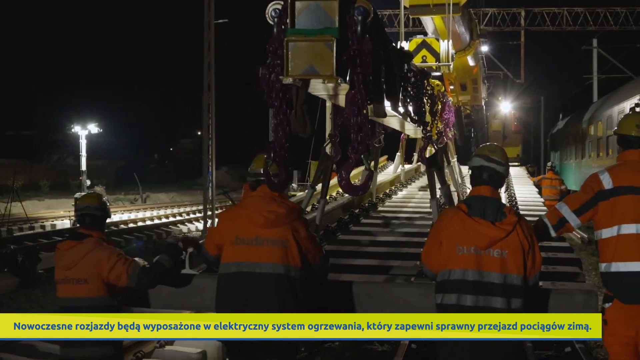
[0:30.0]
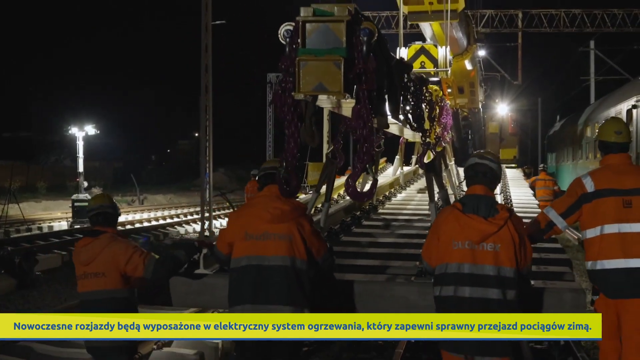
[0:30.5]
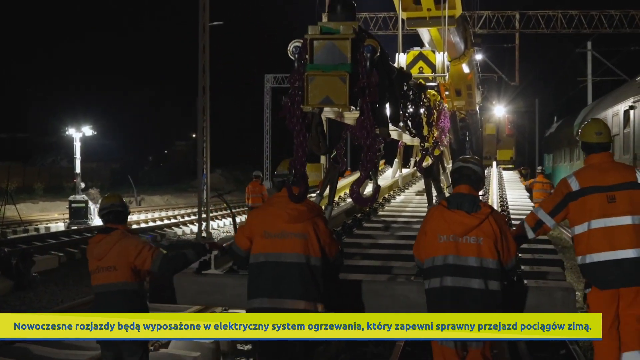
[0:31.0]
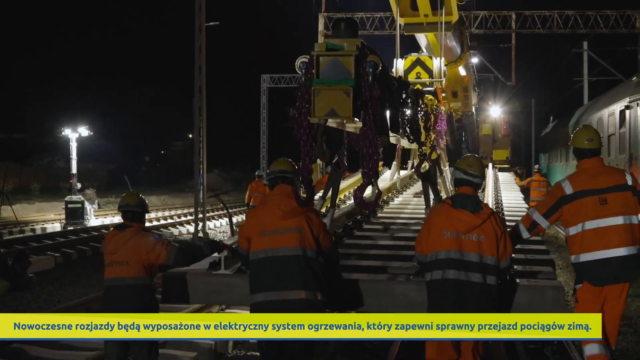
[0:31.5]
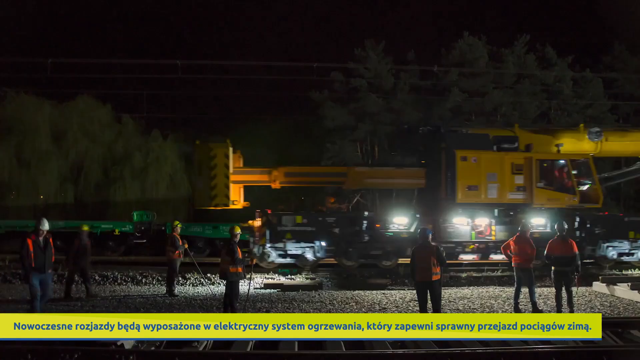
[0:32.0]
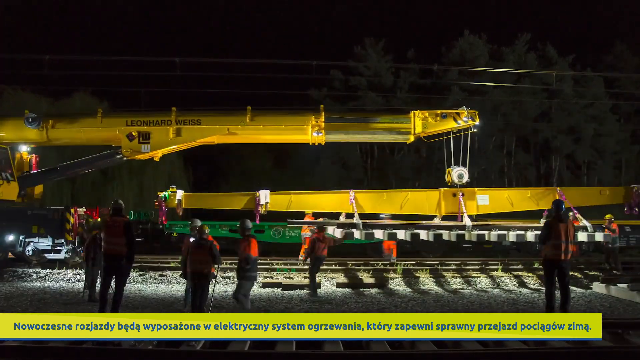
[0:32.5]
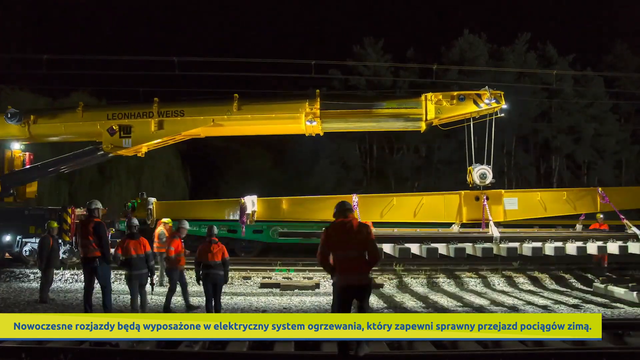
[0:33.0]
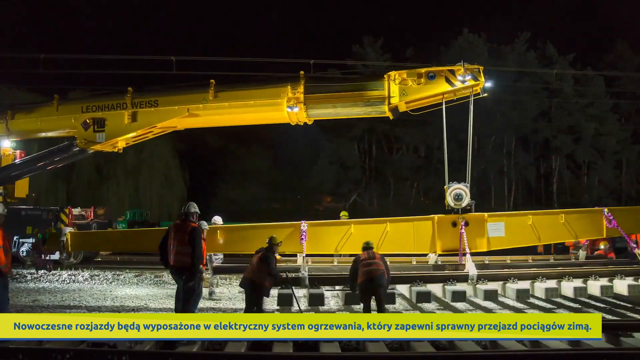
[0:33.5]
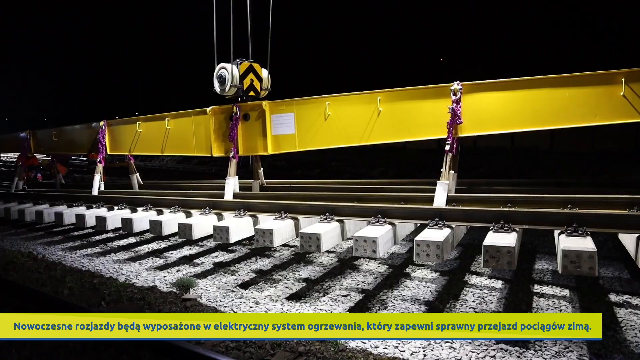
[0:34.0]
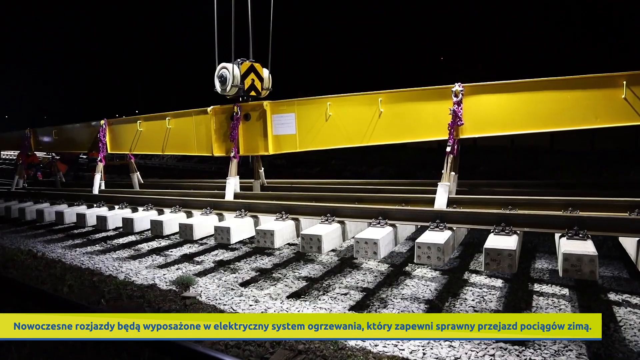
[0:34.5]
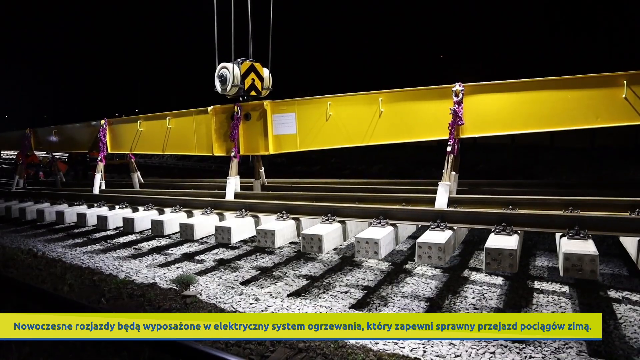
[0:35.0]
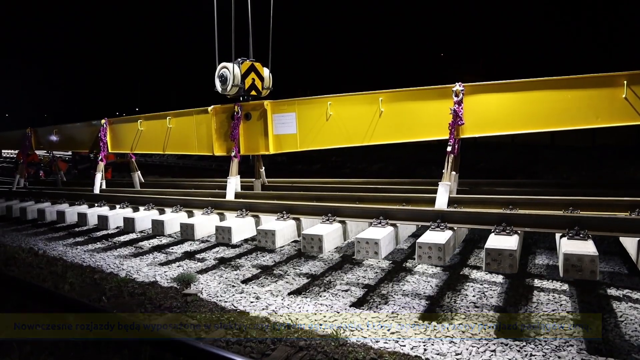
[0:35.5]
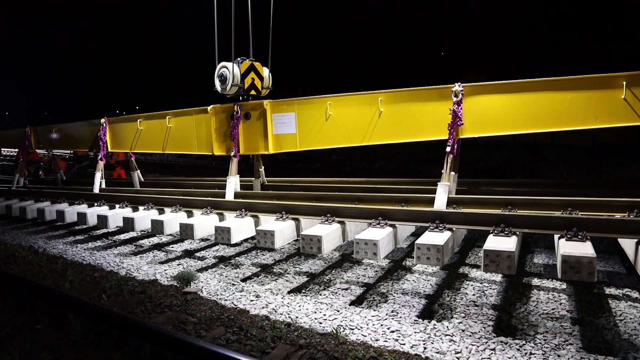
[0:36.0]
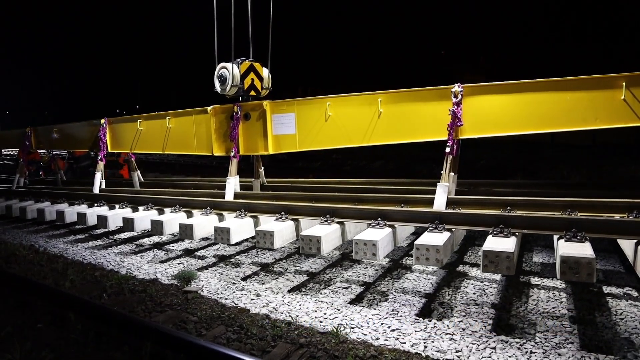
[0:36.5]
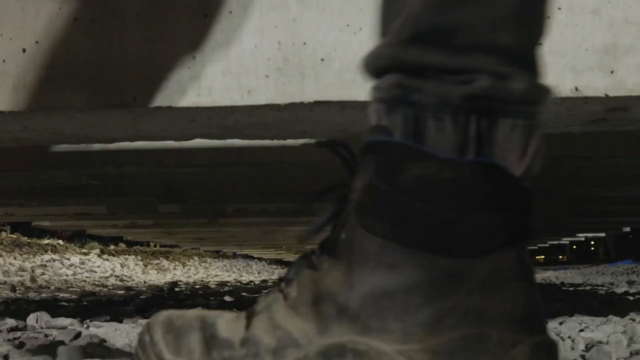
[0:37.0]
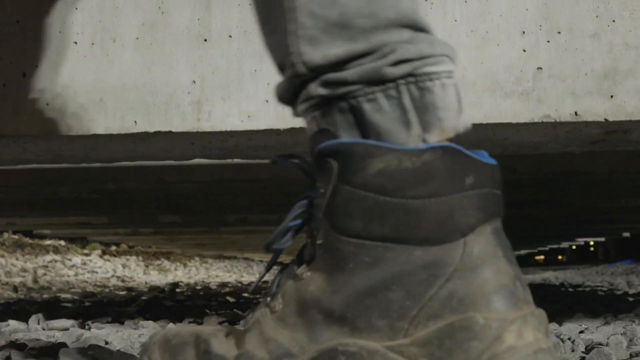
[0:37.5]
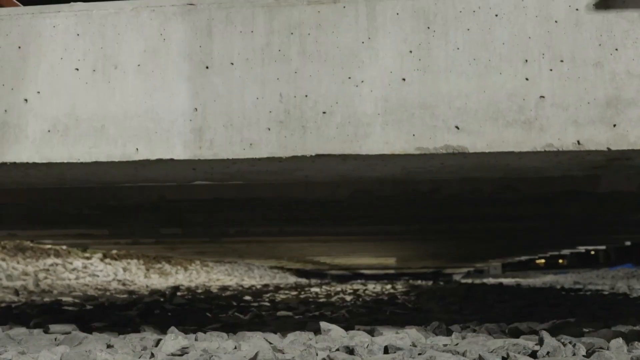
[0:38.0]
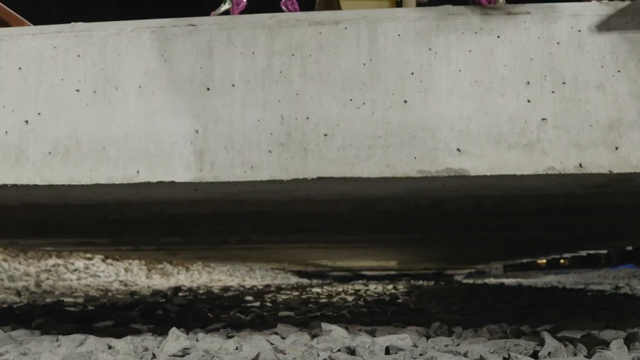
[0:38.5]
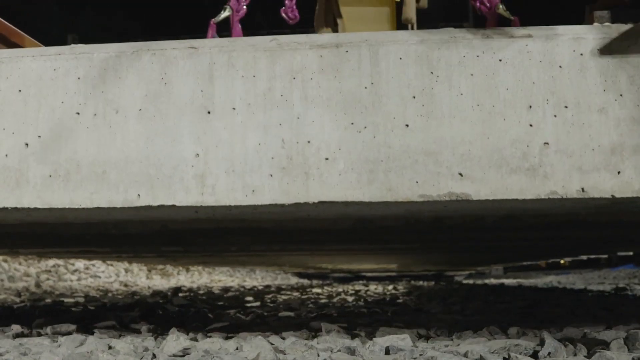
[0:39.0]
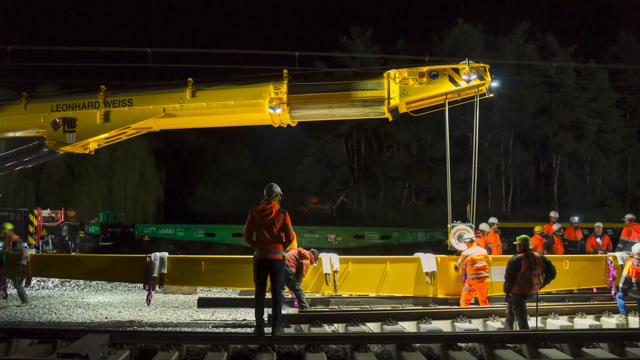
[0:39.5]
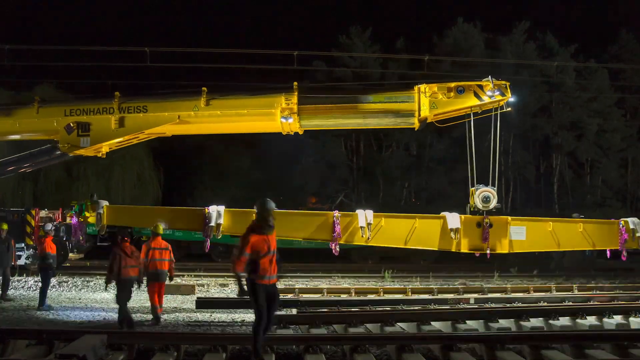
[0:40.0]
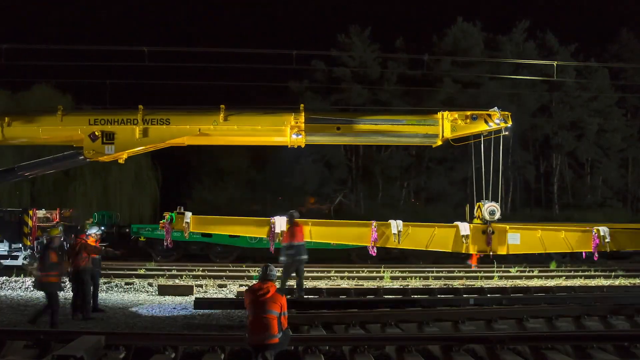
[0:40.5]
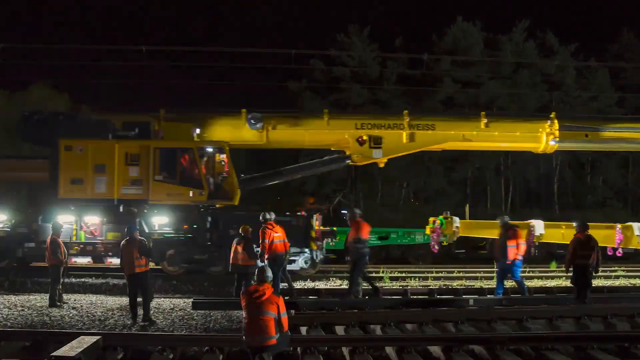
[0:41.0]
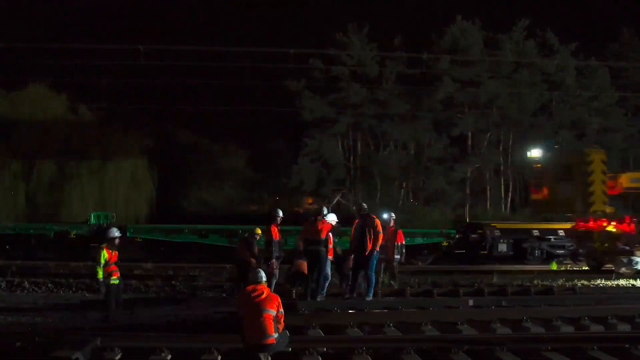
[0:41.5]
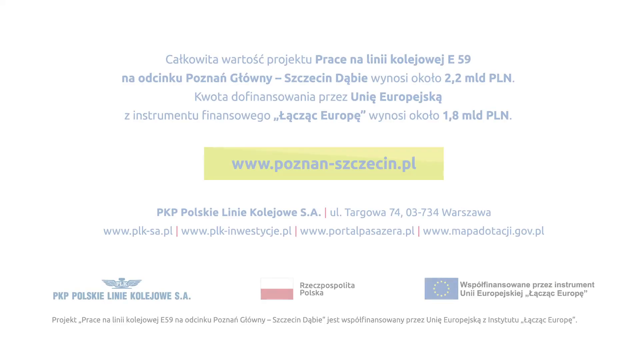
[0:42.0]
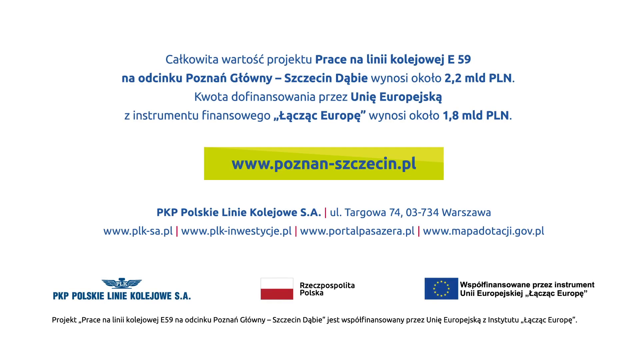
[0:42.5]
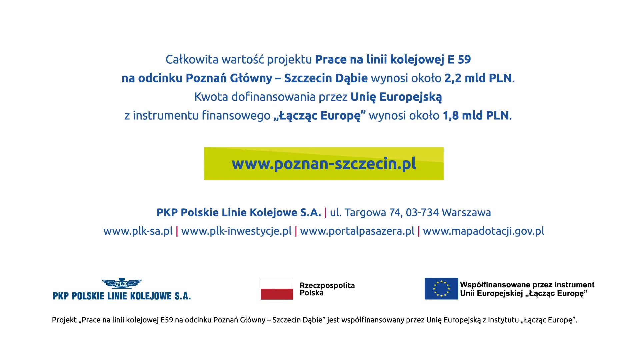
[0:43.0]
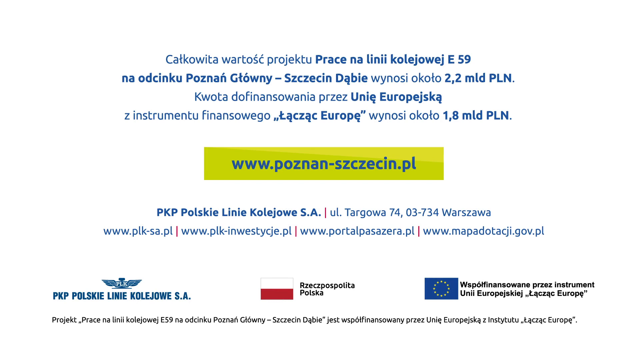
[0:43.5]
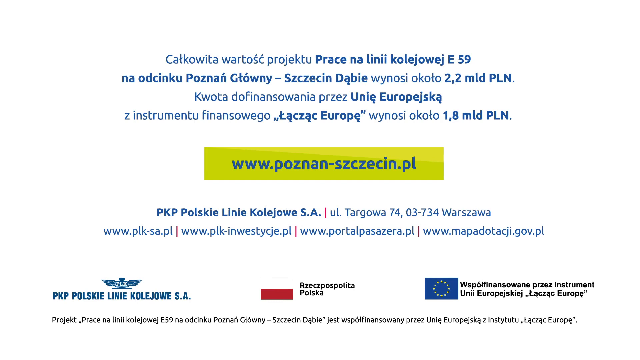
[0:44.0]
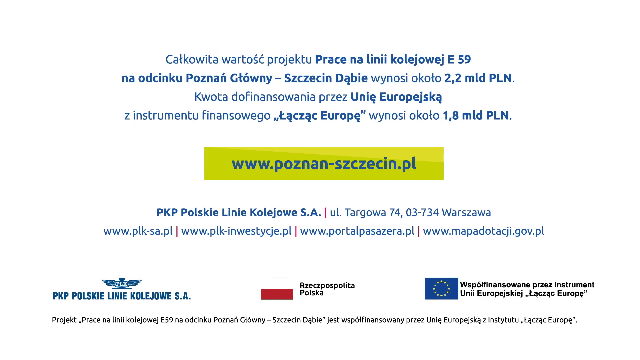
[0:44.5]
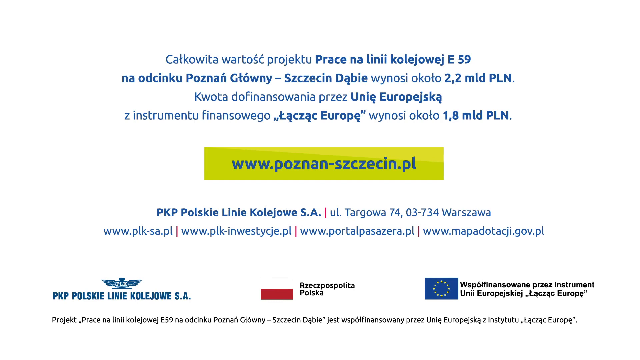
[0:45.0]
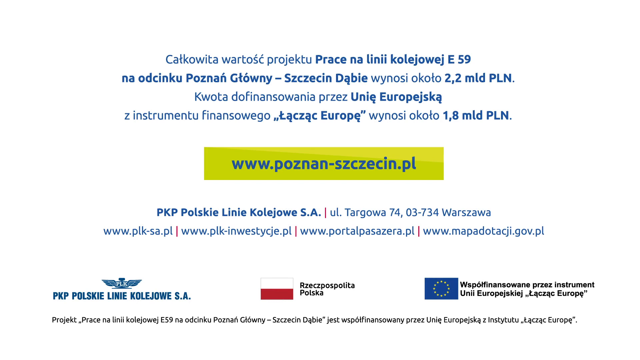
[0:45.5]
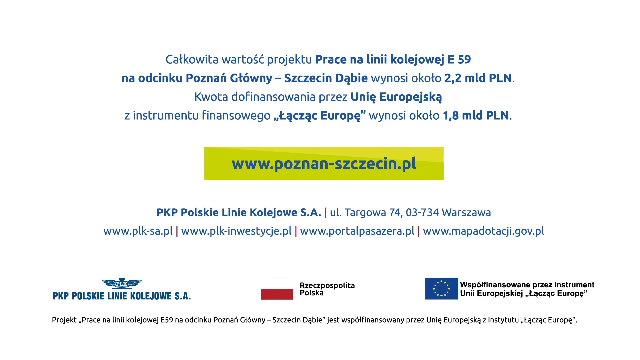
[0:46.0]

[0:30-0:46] The crane holds the railroad piece, with four workers wearing jumpsuits in the front and two workers on each side. A time lapse shows the crane moving the long railroad piece down, with maybe five or six workers helping to put it down. Another shot shows the railroad piece being placed down really slowly by the crane; as the crane lowers it, four thick purple chains are attached to it. At one point there are about 13 workers next to the piece of railroad track. A shot on the floor shows a large piece of cement being lowered down. The video ends with a white background with blue text, which seems to be in Polish because it says "Polska" at the bottom.